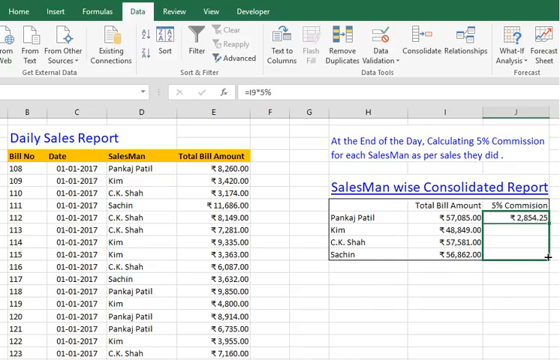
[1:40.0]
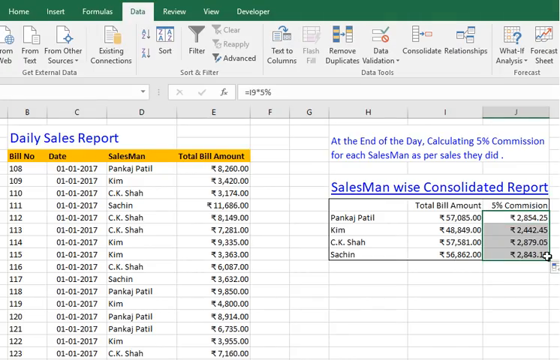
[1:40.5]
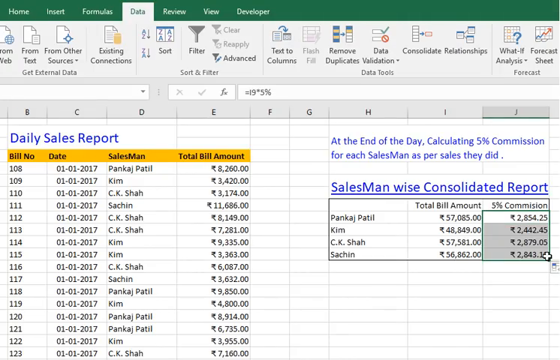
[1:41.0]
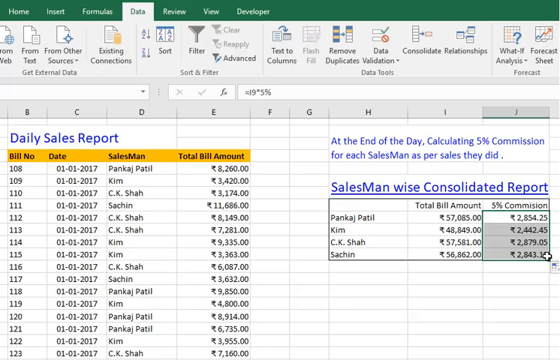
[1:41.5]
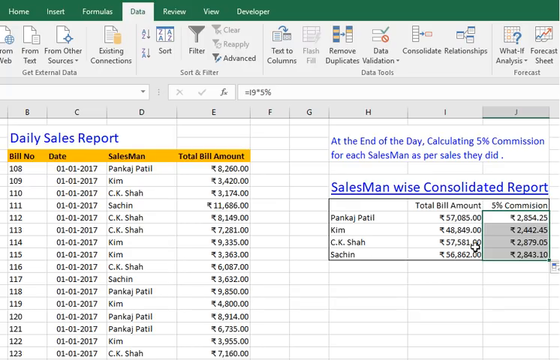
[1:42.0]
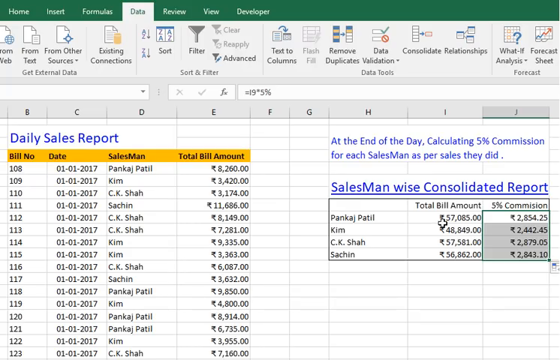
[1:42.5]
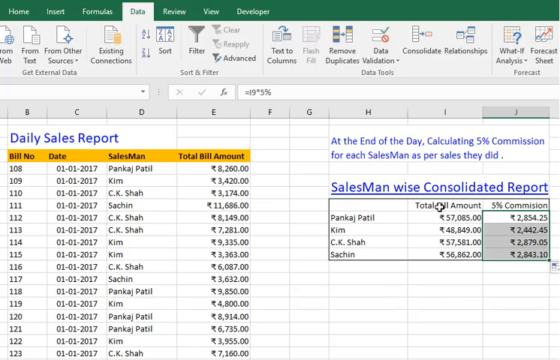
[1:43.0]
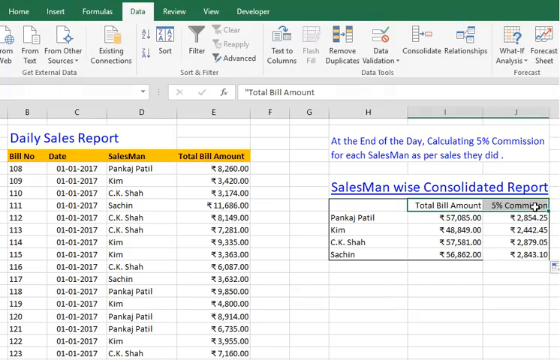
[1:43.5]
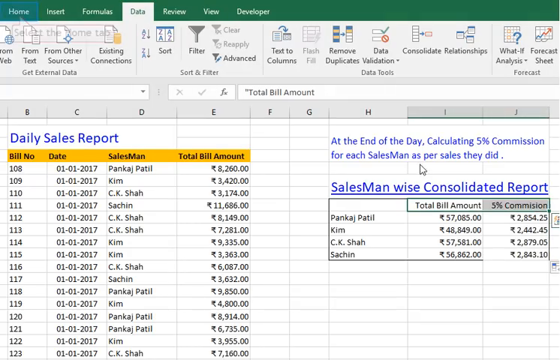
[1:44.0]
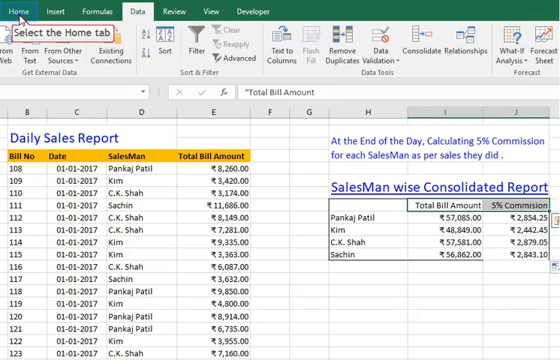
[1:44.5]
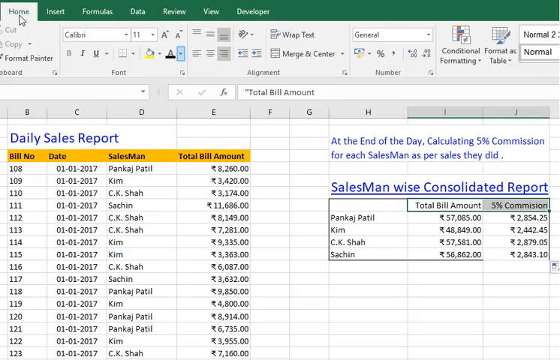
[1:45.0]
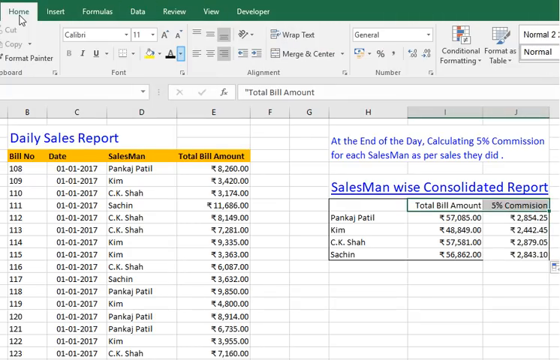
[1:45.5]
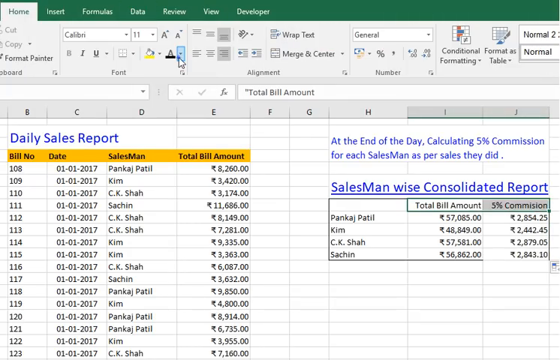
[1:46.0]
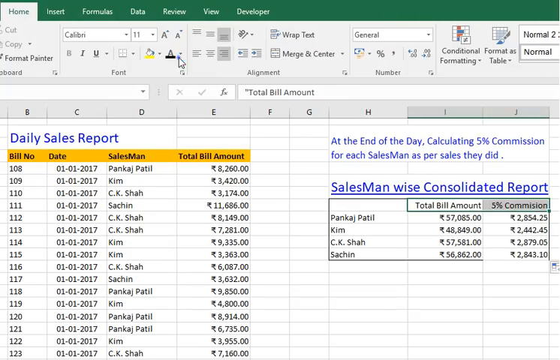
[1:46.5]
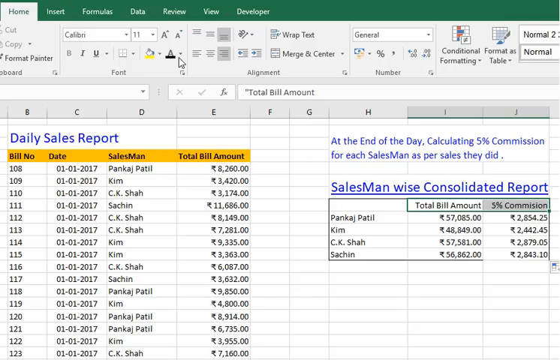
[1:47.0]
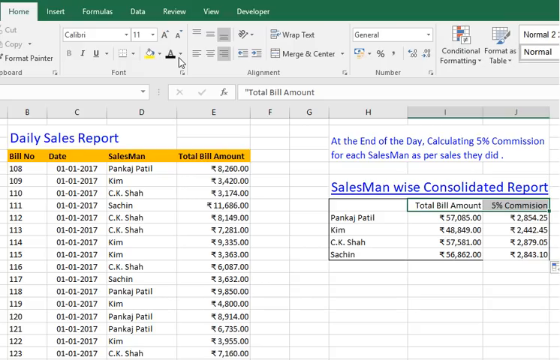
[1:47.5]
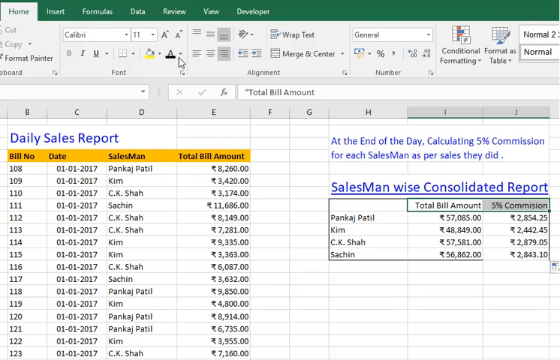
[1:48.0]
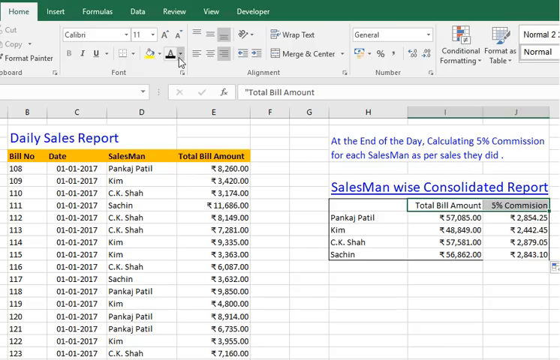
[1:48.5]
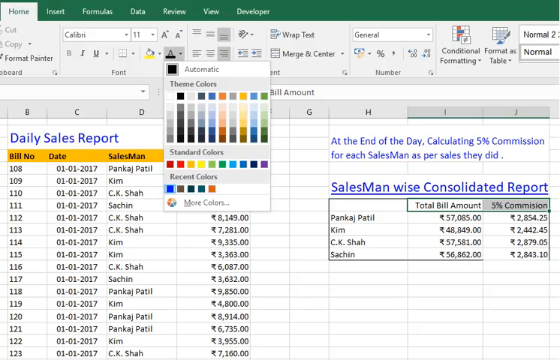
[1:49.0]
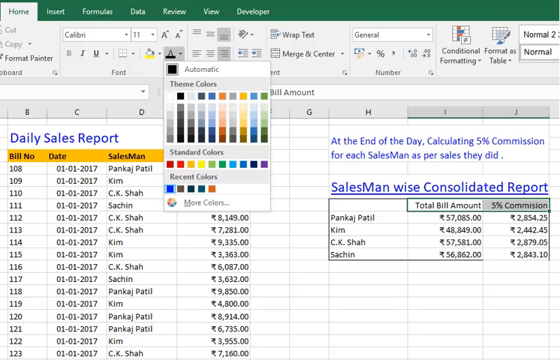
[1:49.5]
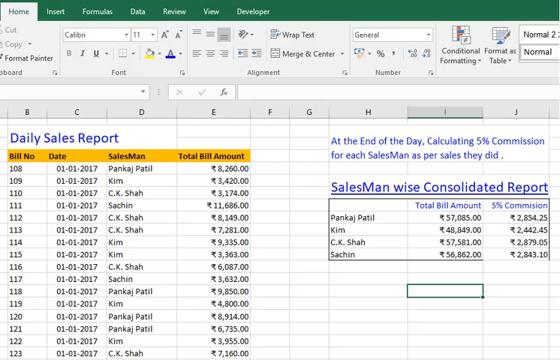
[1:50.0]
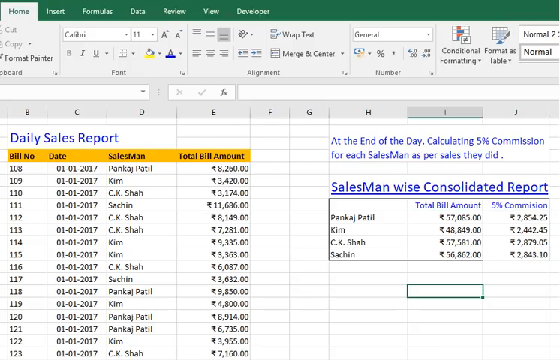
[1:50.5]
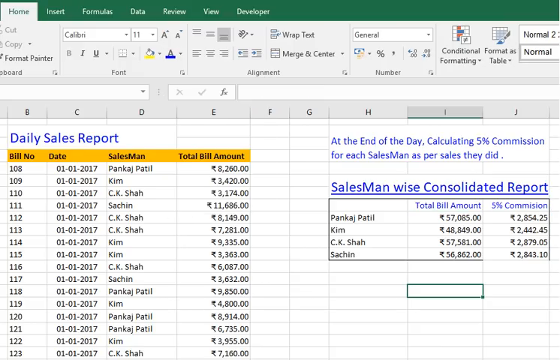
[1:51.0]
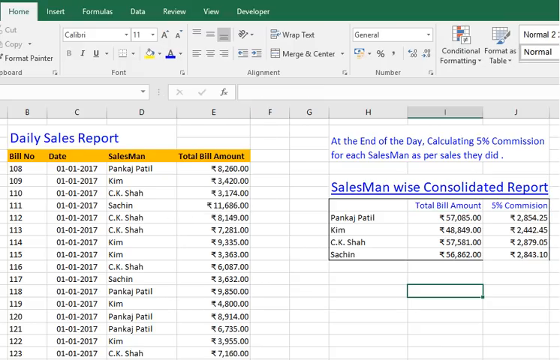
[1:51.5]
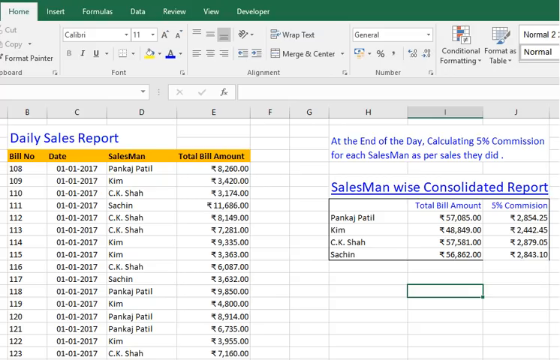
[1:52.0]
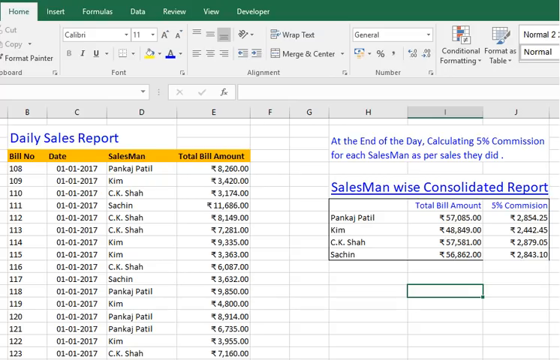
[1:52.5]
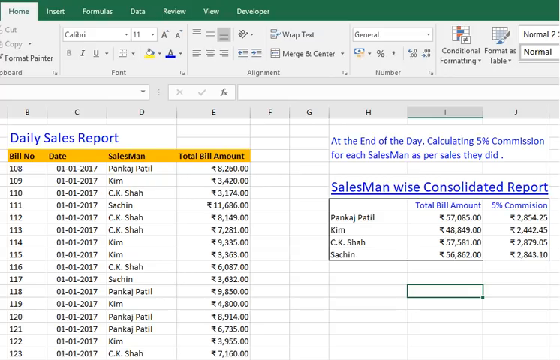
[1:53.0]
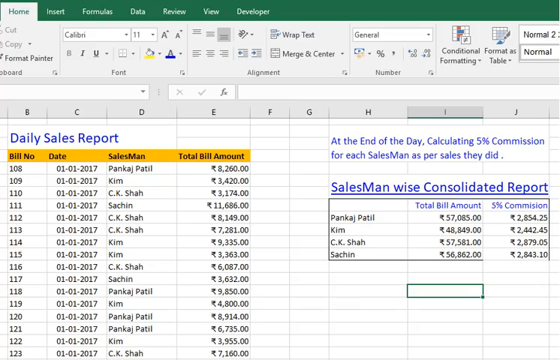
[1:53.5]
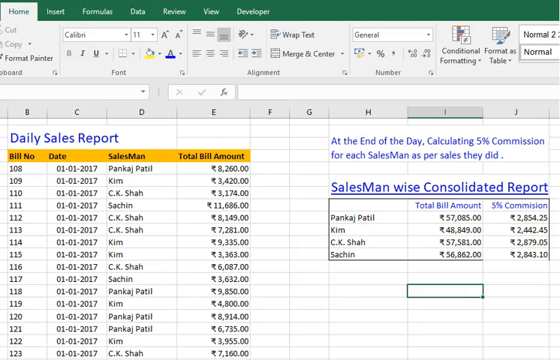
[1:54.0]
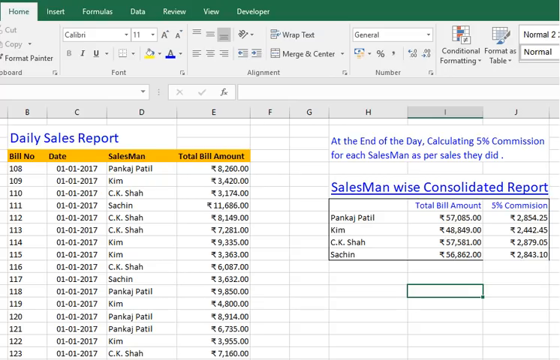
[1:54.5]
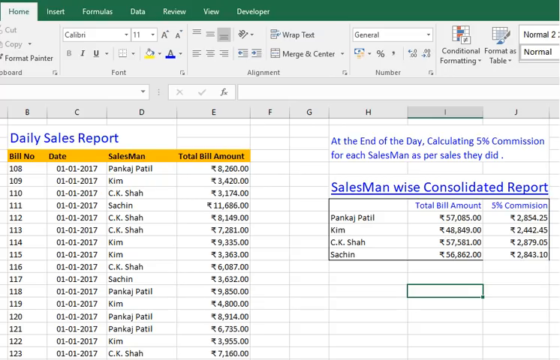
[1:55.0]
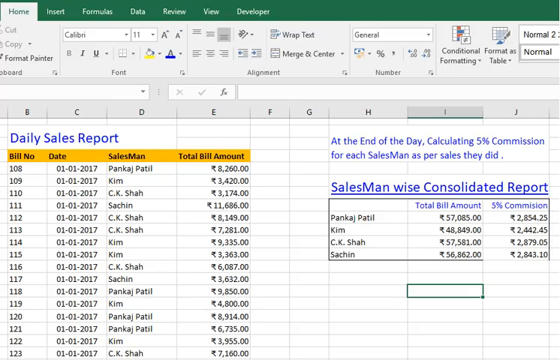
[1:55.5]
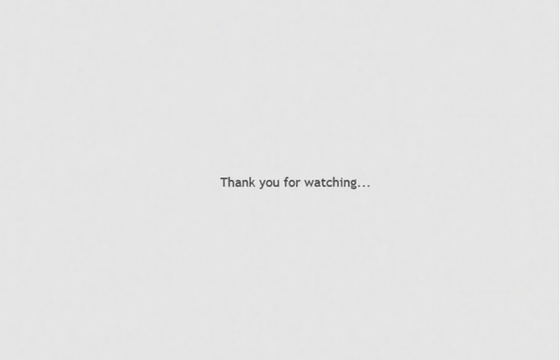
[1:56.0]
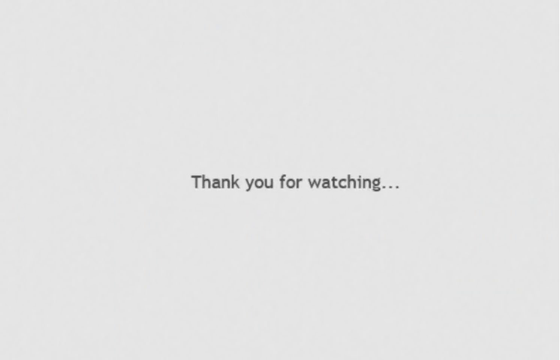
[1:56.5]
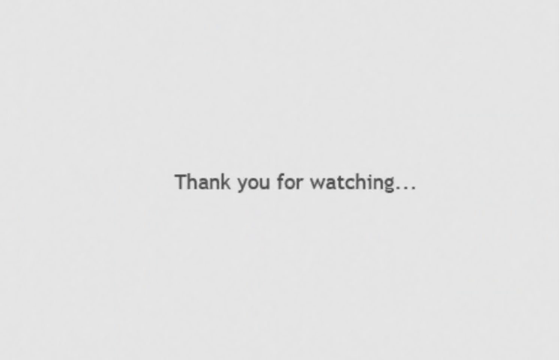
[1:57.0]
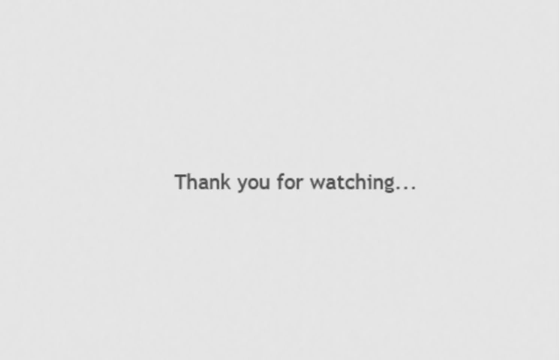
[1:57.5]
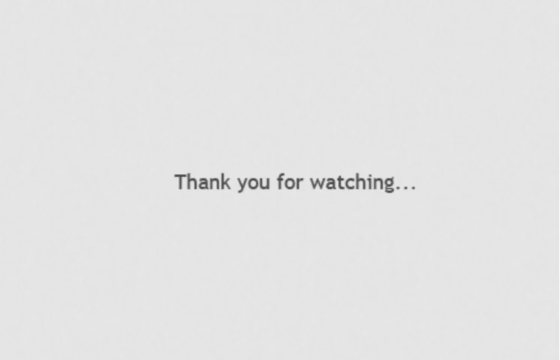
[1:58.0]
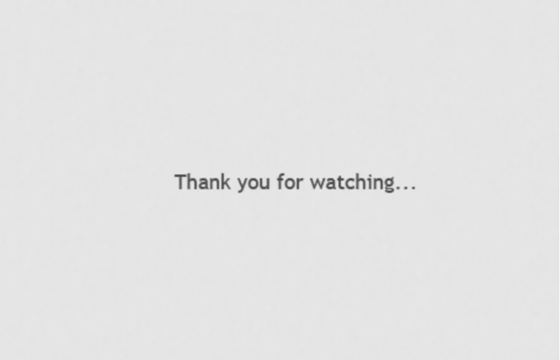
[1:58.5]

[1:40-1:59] The complete salesman consolidated report is shown. At the top is information that says, "calculating 5 commission for each salesman as per sales they did." Nothing changes; the setting stays the same, and the text on the screen is readable.